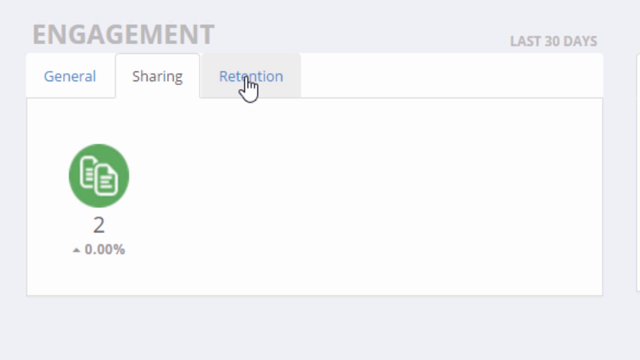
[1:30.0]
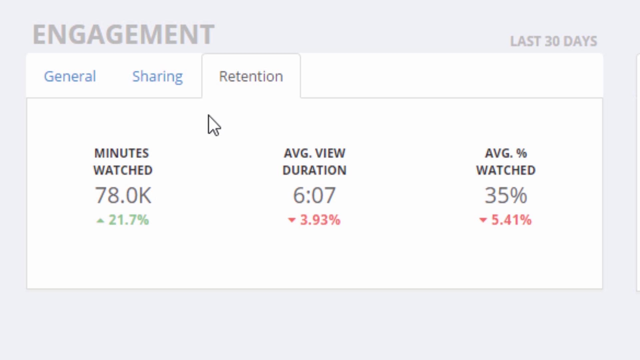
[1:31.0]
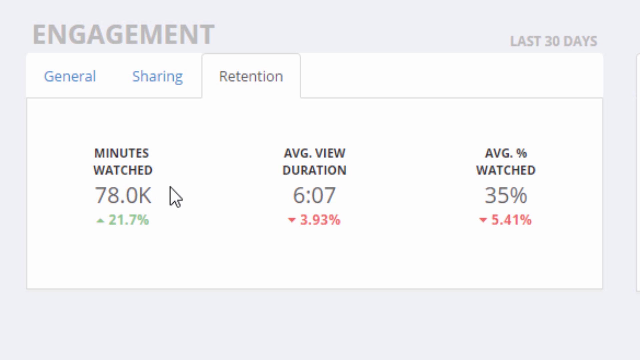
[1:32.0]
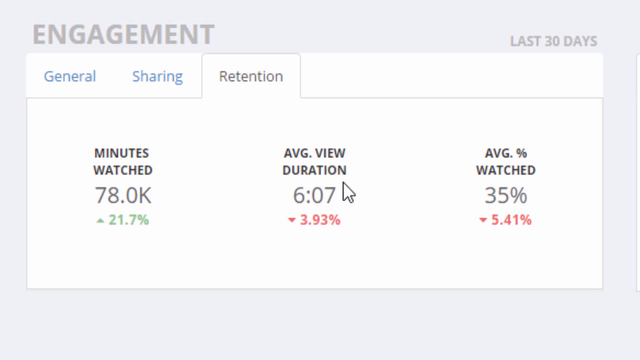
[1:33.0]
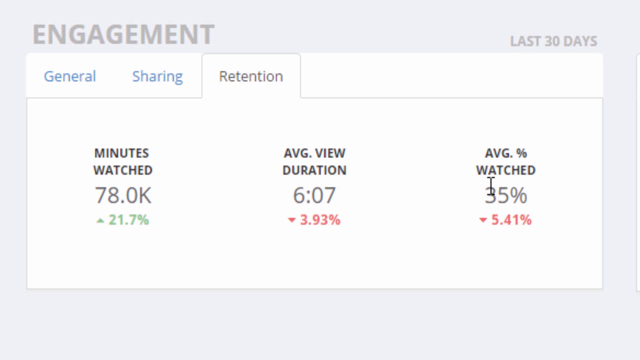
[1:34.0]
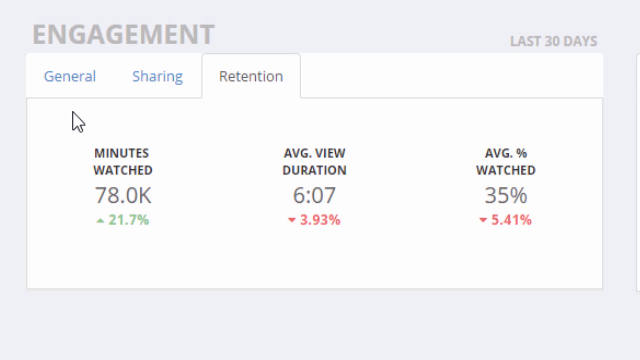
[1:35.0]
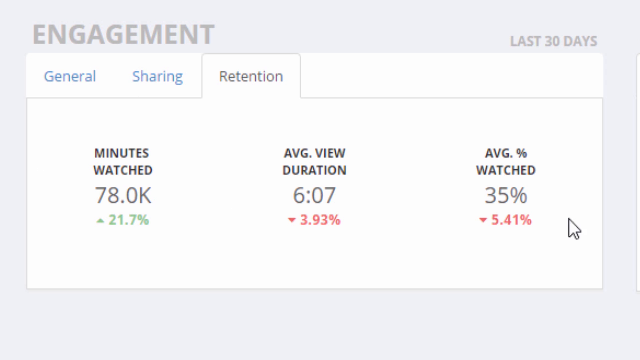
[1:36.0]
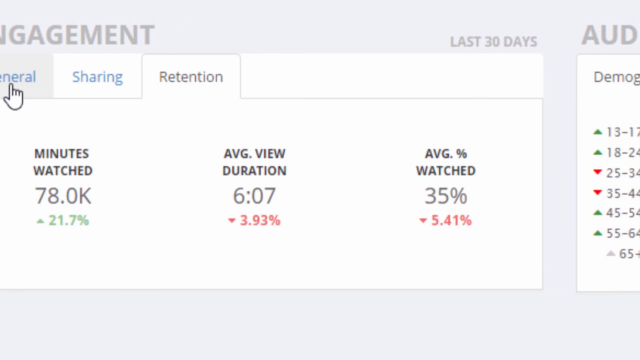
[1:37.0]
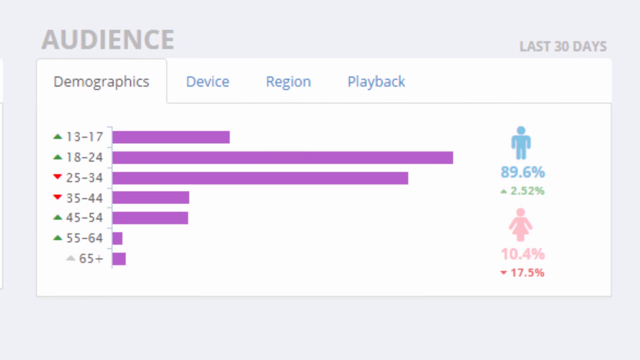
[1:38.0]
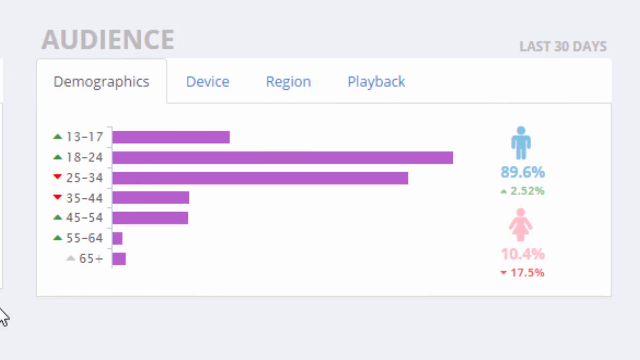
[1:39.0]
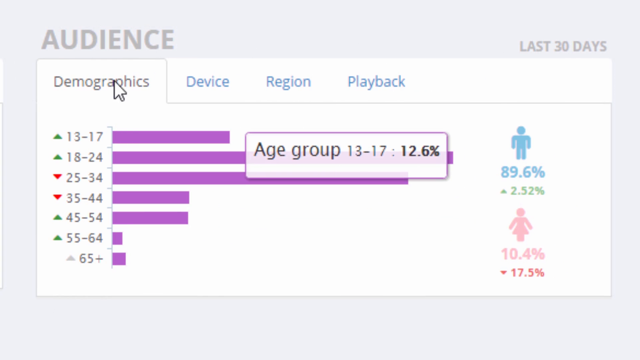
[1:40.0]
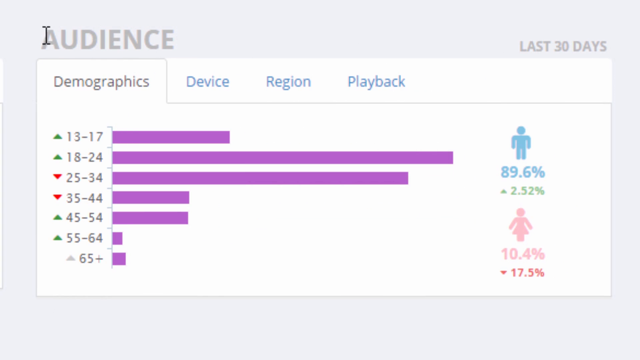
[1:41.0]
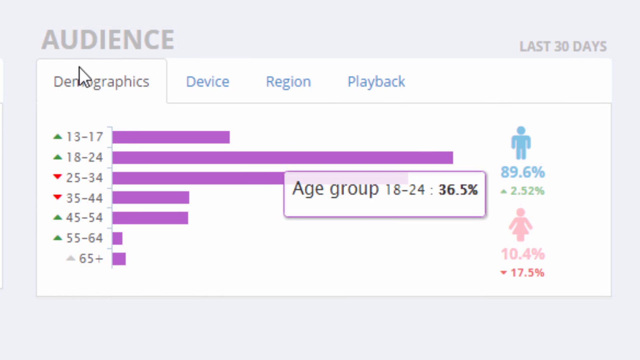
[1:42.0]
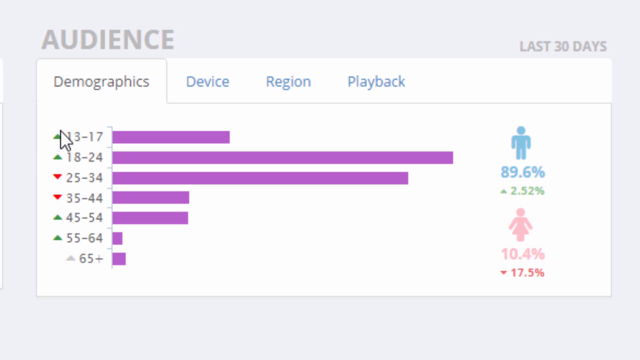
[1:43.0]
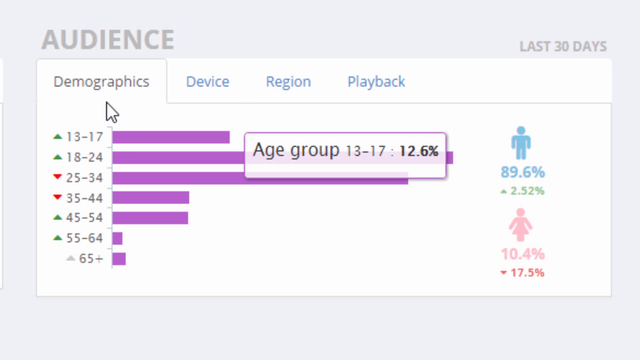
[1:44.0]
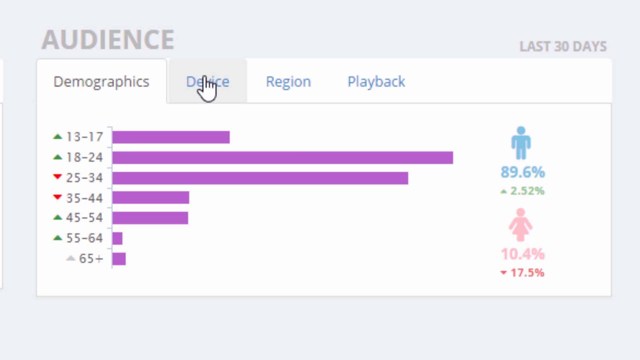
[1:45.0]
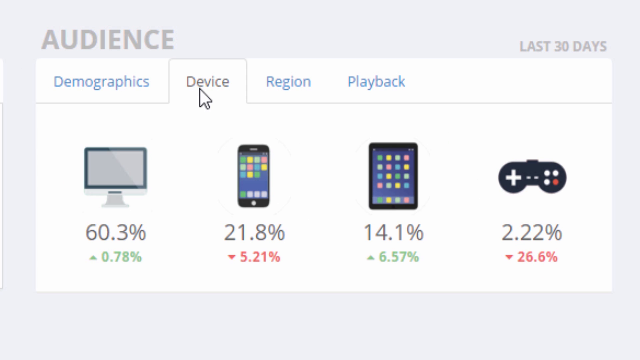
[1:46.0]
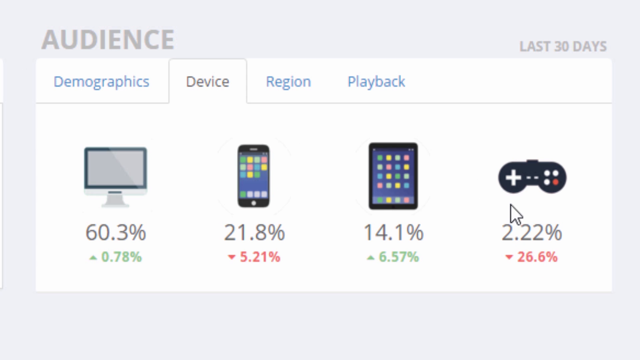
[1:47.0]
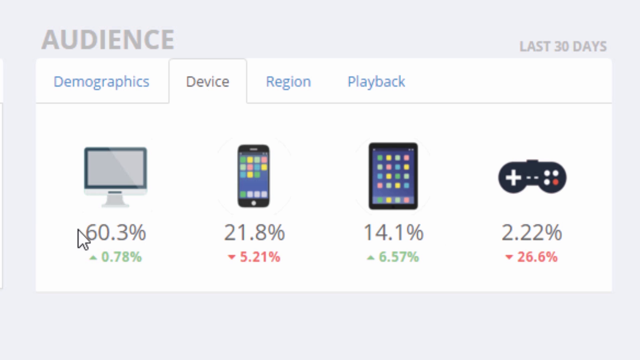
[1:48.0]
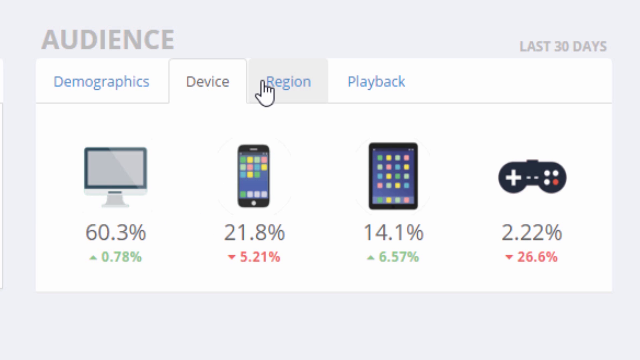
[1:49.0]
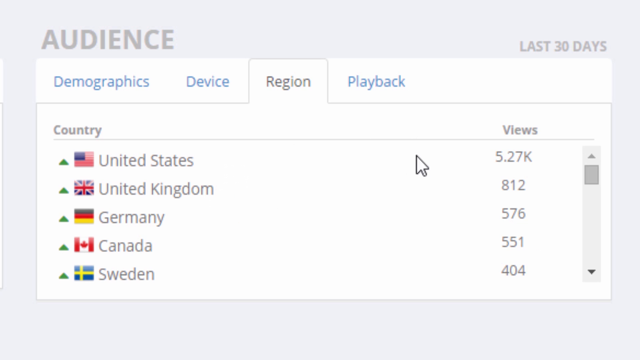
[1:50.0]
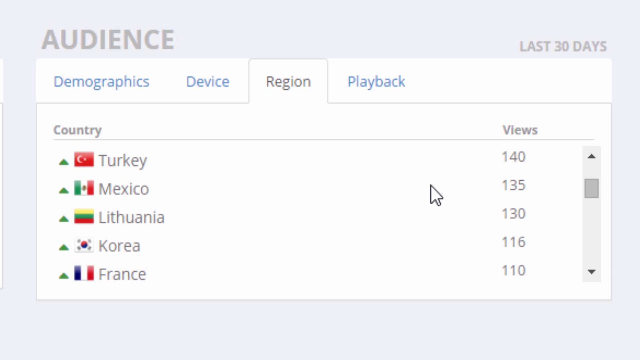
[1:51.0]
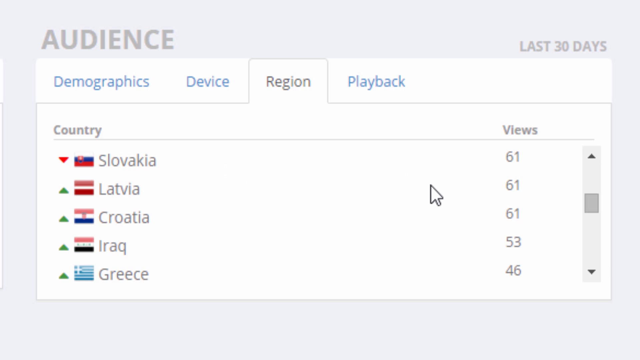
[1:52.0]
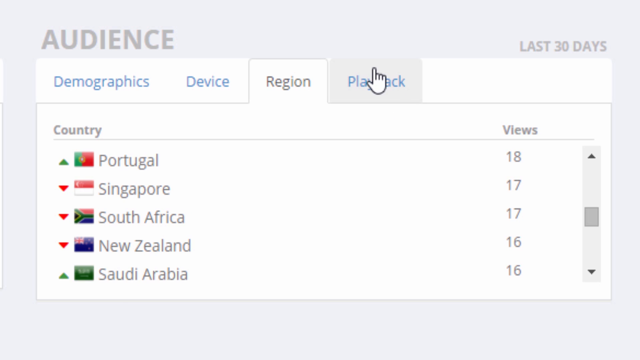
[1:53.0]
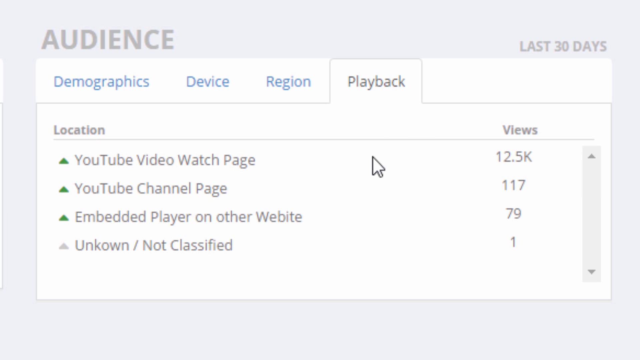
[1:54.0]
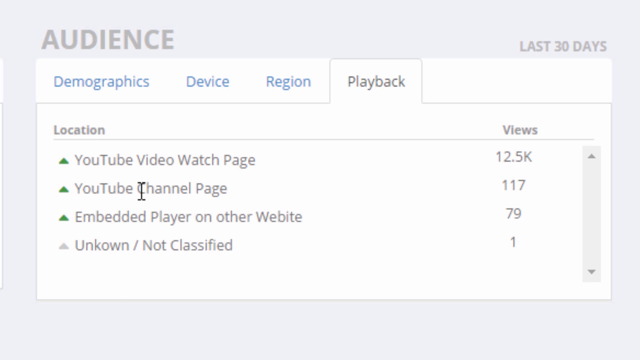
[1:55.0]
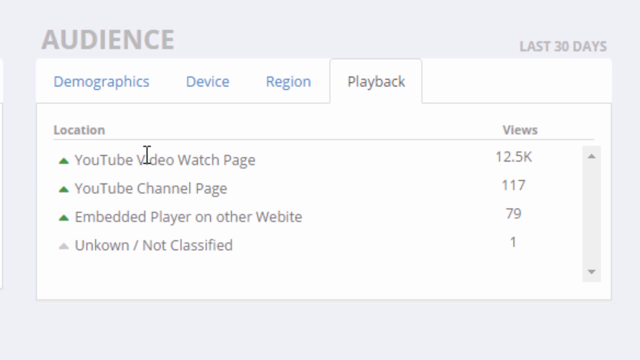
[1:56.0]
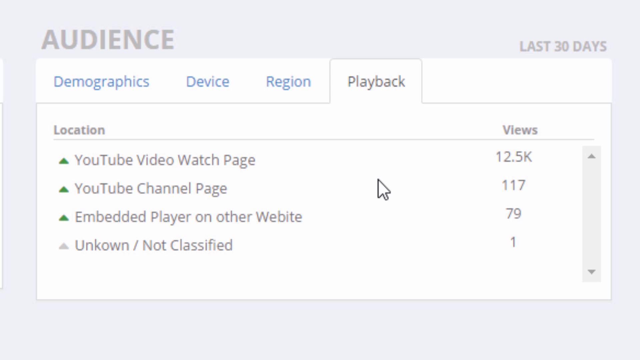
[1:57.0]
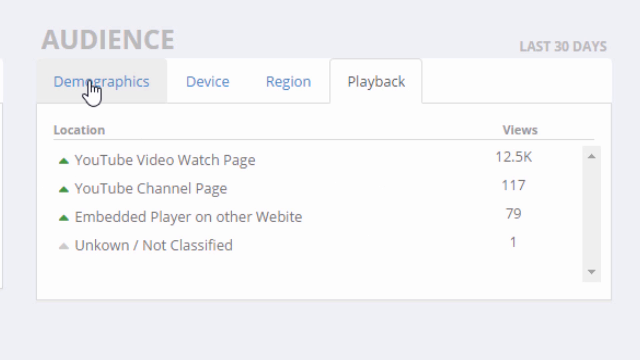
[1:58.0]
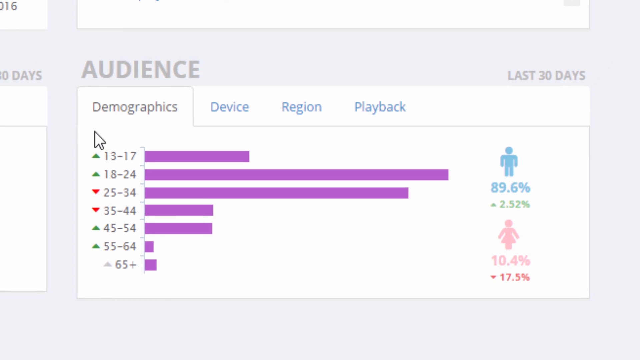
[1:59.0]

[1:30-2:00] The person is still in the engagement section of the YouTube profile and moves from sharing to retention. Under retention: minutes watched 78,000, 21.7 percent; average view duration six minutes and seven seconds, minus 3.93 percent; average percent watched 35 percent, down 5.41 percent, covering the last 30 days. Next comes the audience section, with four tabs: demographics, device, region and playback. The demographics tab lists age ranges 13–17, 18–24, 25–34, 35–44, 45–54, 55–64 and 65+. The device tab shows 60.3 percent for the computer, 21.8 percent for the iPhone, 14.1 percent for iPads and 22.2 percent for the video game controller. The region tab lists many different countries with the views for each.